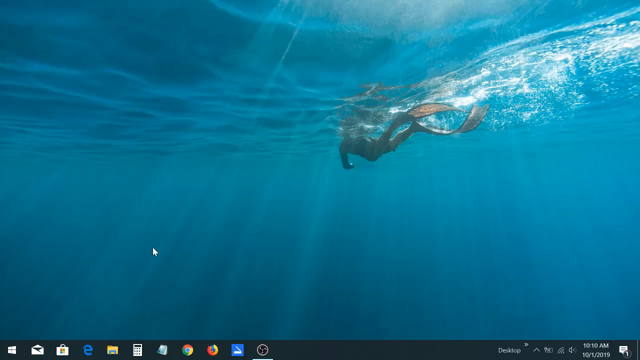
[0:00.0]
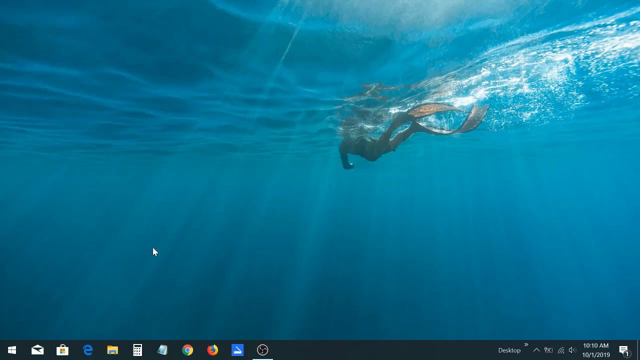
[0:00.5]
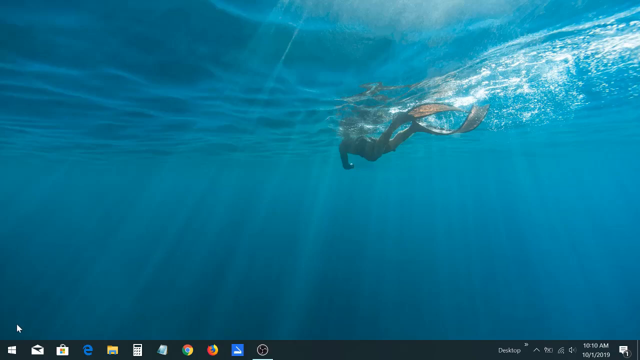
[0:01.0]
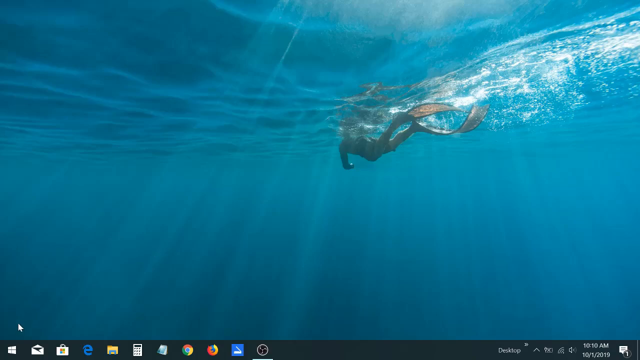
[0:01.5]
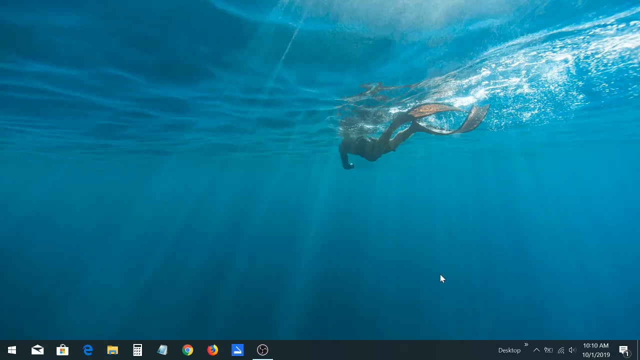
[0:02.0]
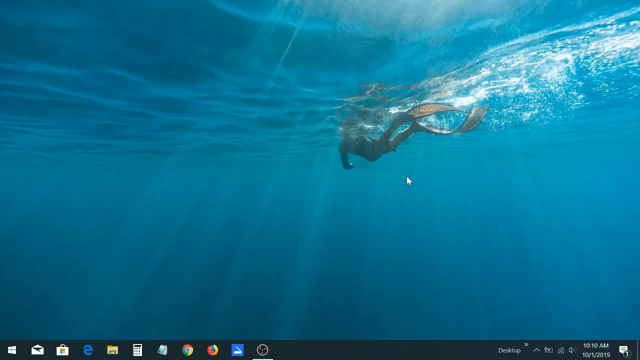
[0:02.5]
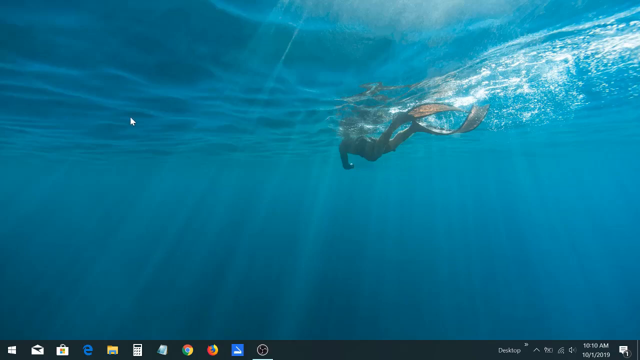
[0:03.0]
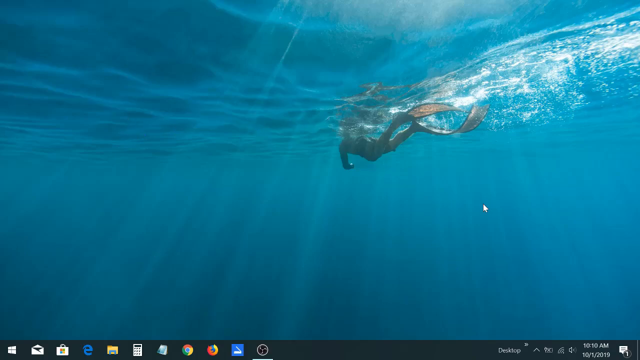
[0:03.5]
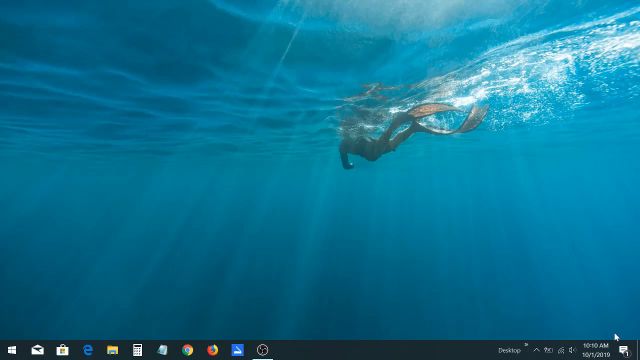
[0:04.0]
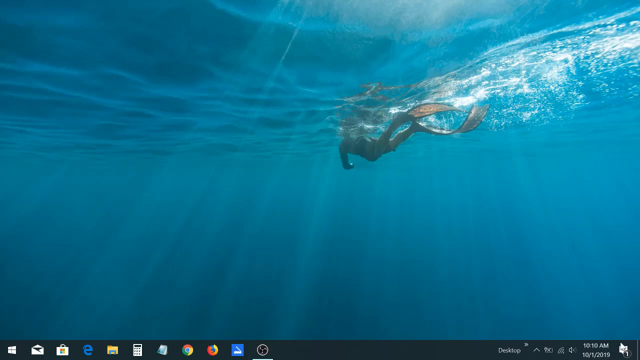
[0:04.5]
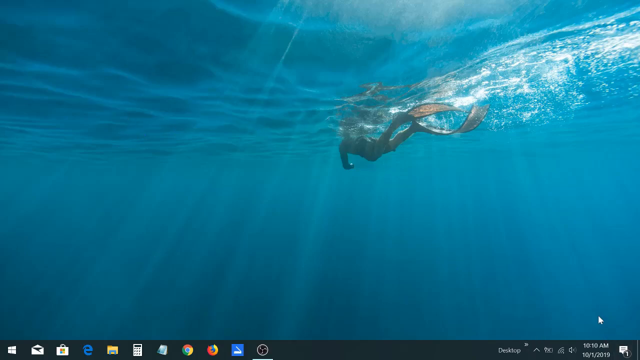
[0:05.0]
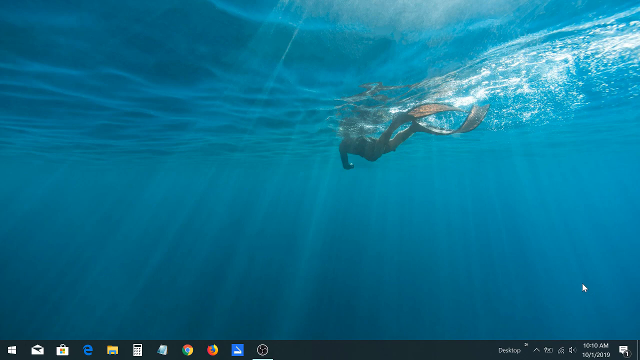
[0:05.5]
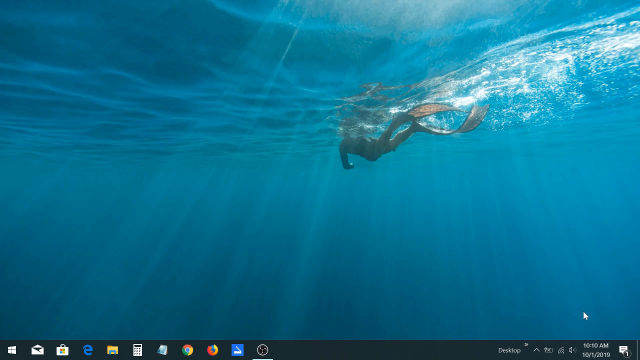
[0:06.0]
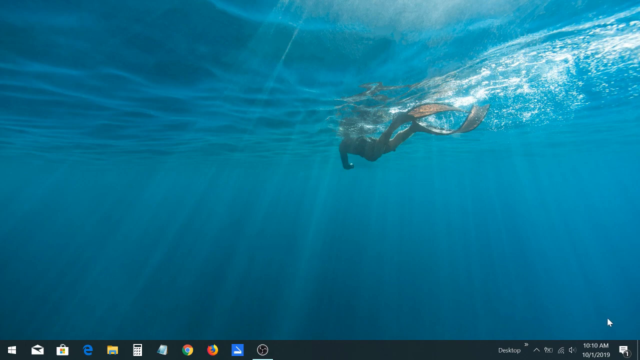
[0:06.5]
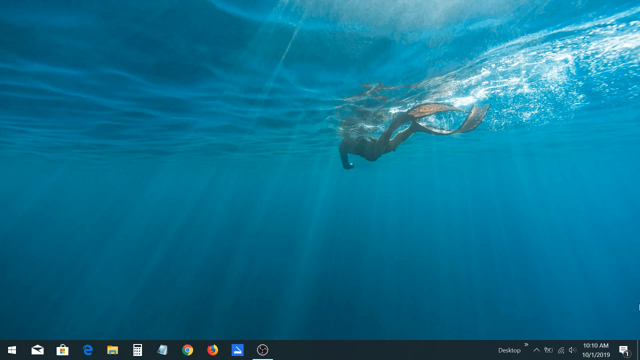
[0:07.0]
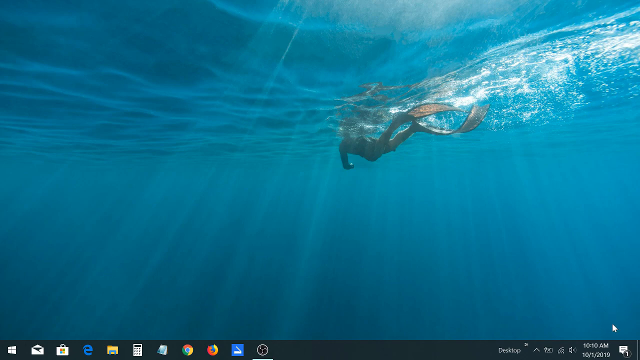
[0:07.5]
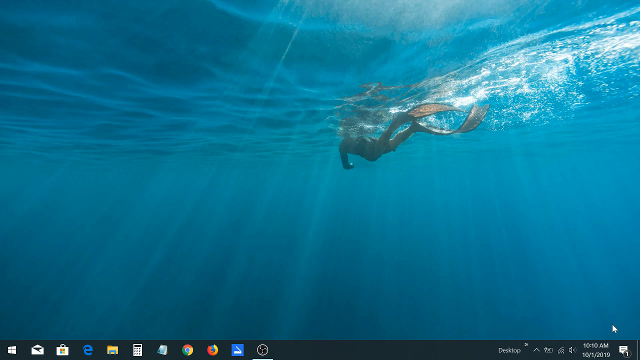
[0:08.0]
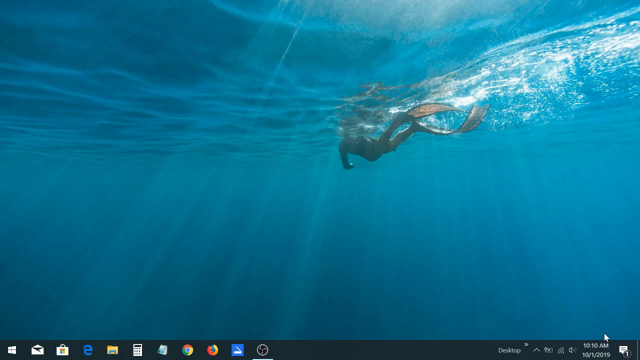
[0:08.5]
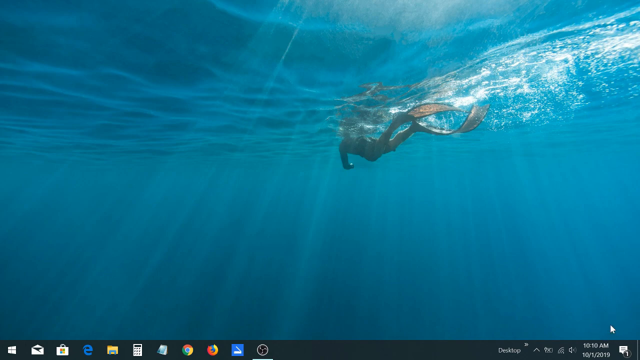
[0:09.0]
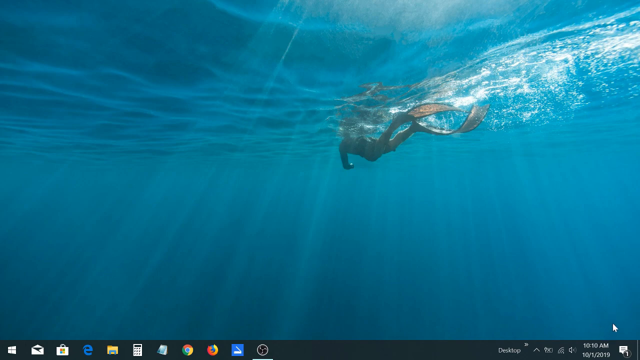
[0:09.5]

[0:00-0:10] A computer screen shows a wallpaper picture of a scuba diver underwater, barely below the surface, with a trail in the water behind them. The sun reflects down into the water and its rays are visible; the water is a very pretty blue. The computer is running Windows, as the layout of the screen shows. Someone moves the mouse, circling it right above the clock, and apparently moves it all around the screen as well.